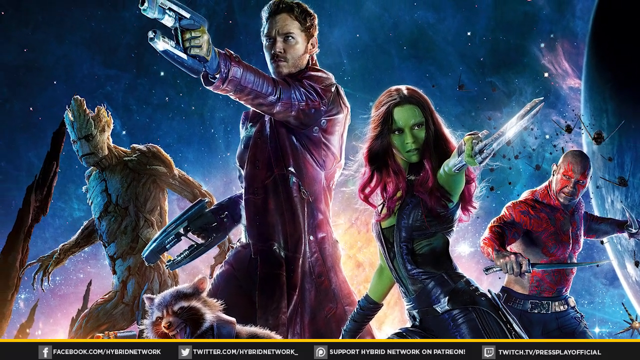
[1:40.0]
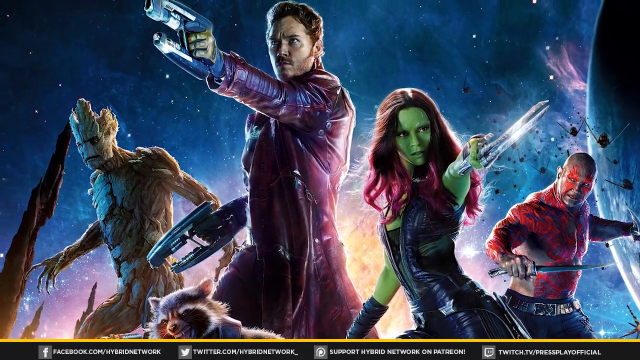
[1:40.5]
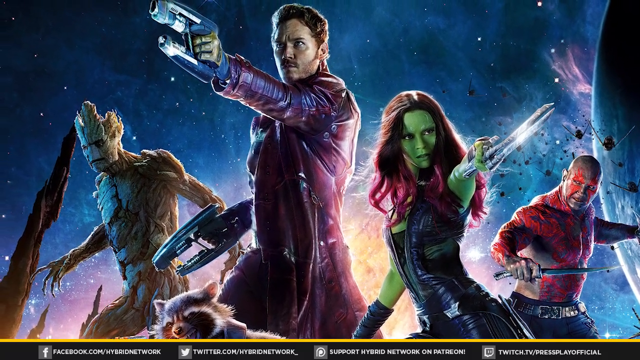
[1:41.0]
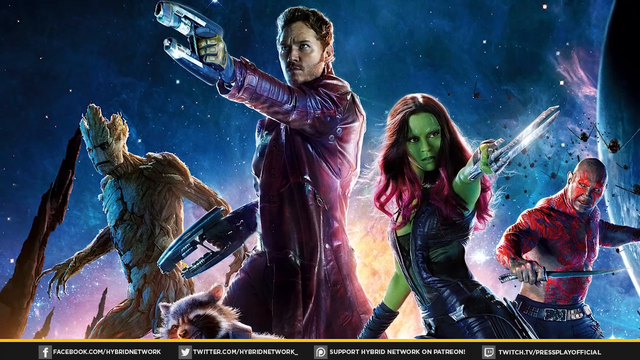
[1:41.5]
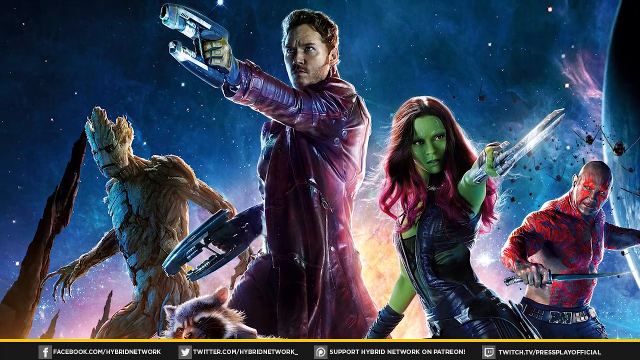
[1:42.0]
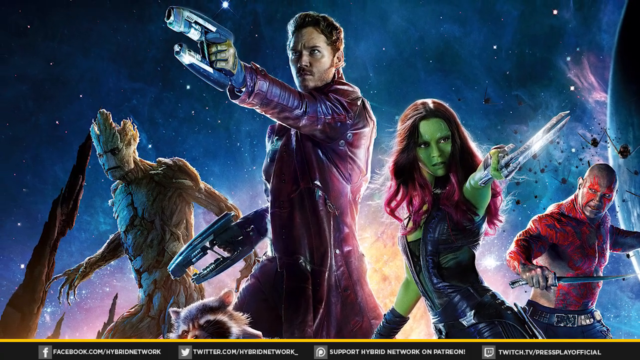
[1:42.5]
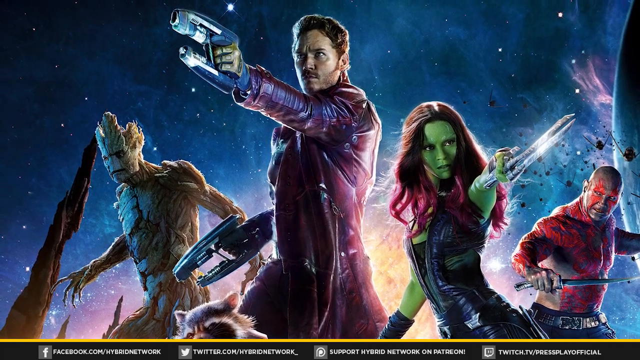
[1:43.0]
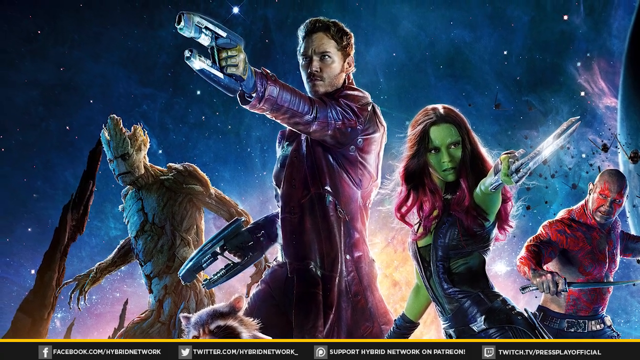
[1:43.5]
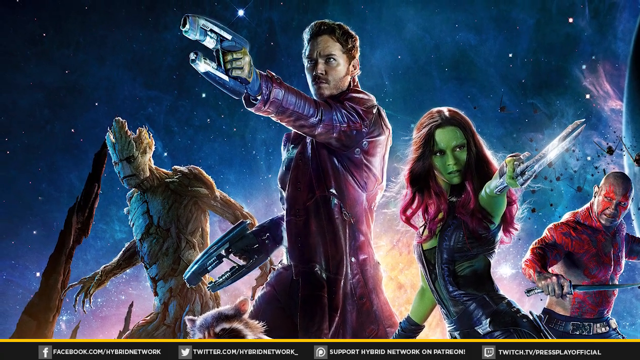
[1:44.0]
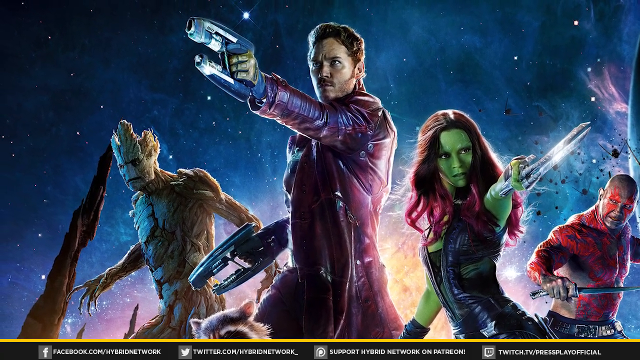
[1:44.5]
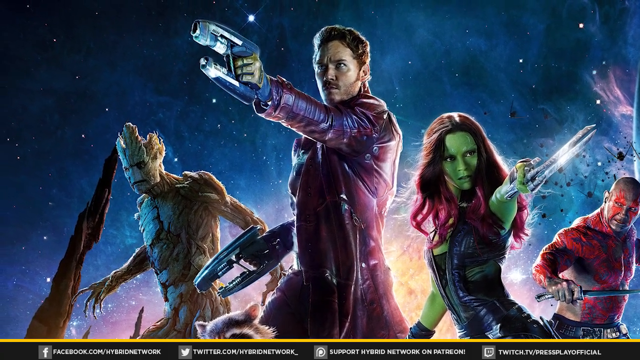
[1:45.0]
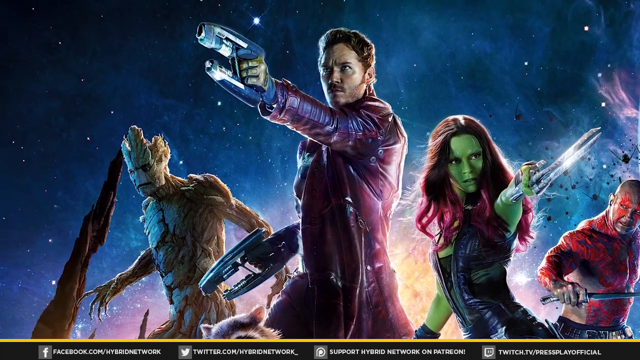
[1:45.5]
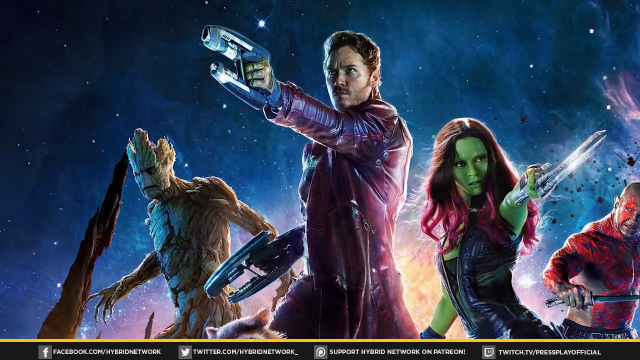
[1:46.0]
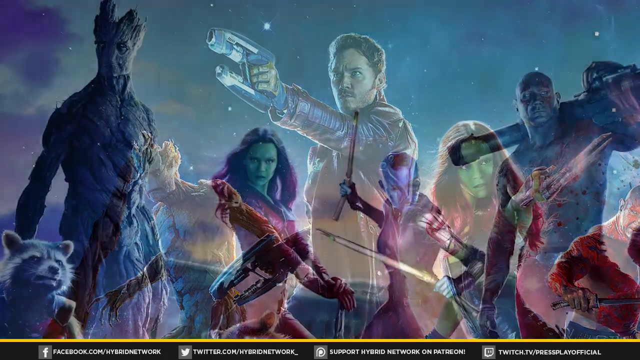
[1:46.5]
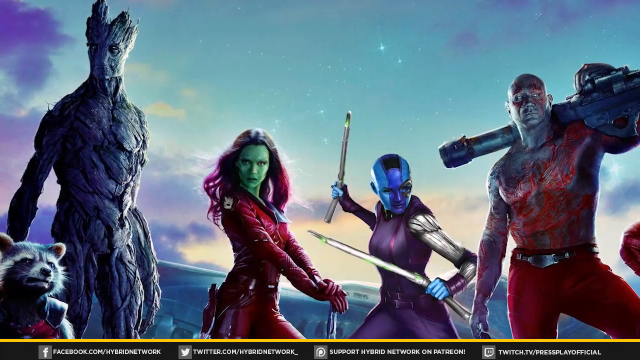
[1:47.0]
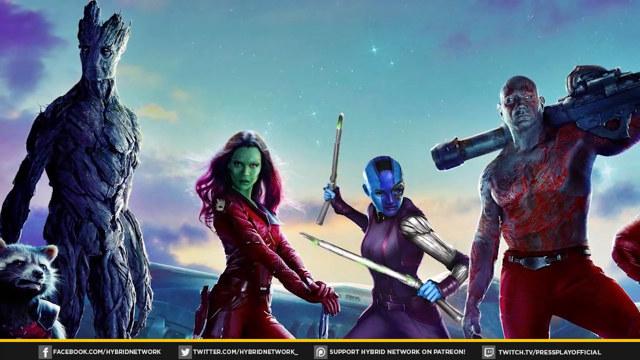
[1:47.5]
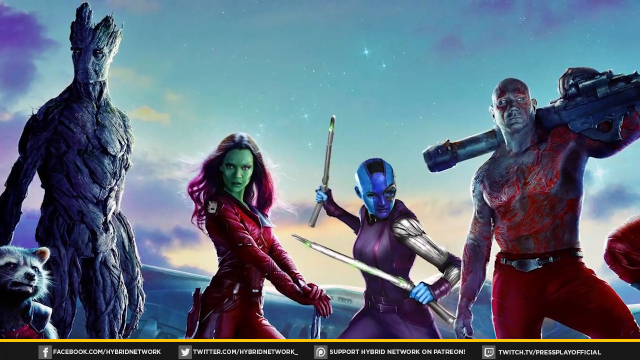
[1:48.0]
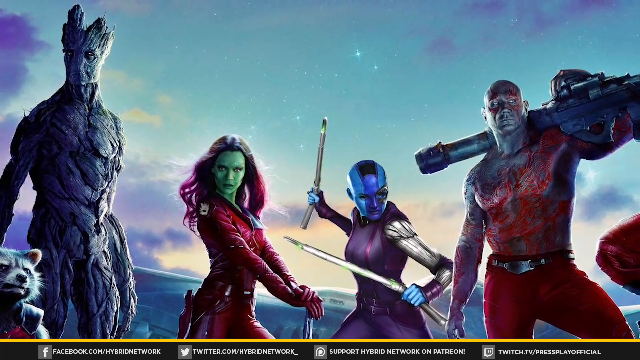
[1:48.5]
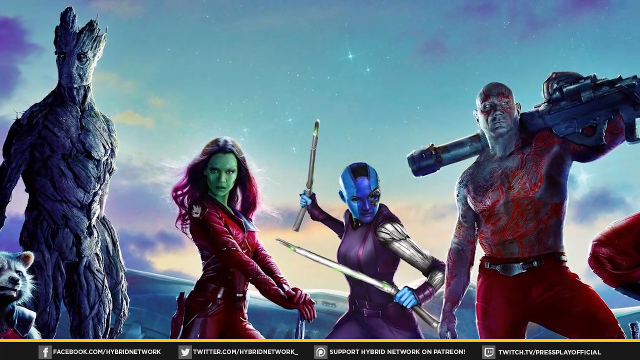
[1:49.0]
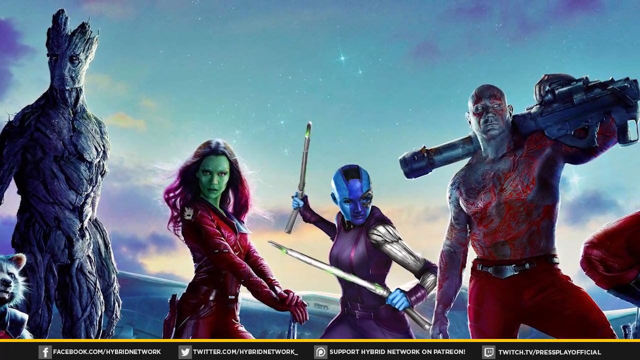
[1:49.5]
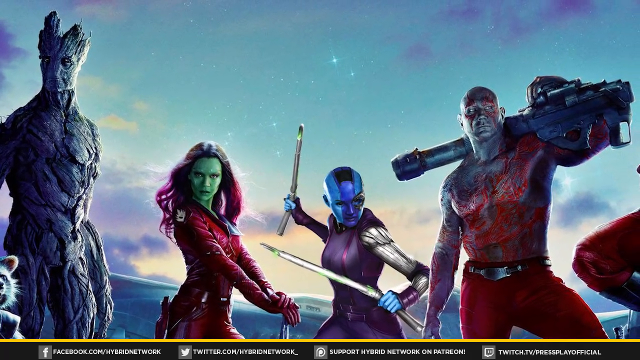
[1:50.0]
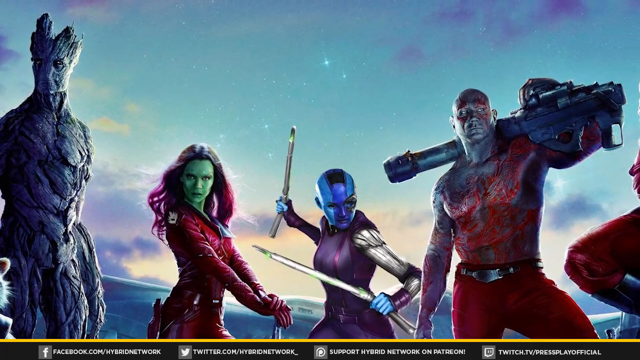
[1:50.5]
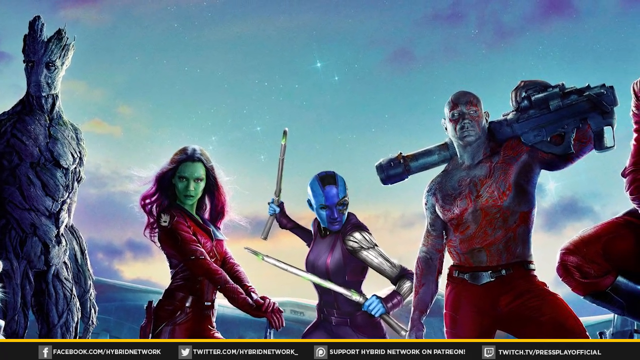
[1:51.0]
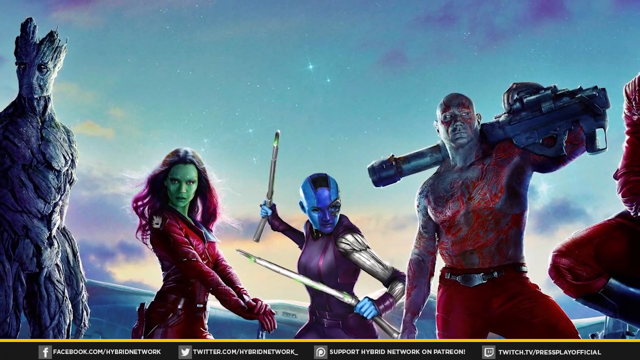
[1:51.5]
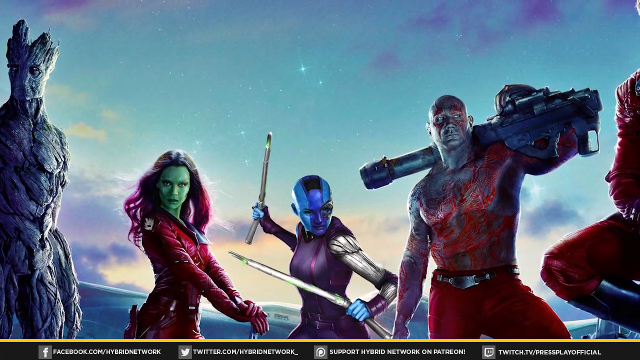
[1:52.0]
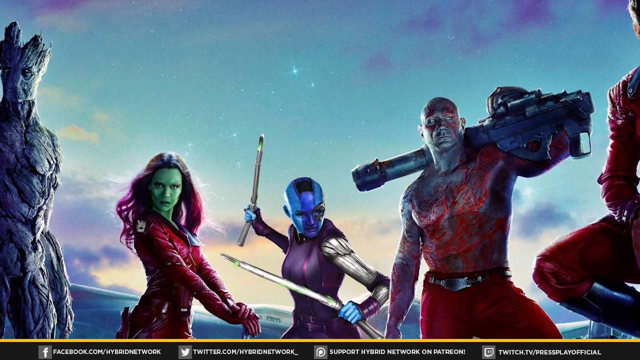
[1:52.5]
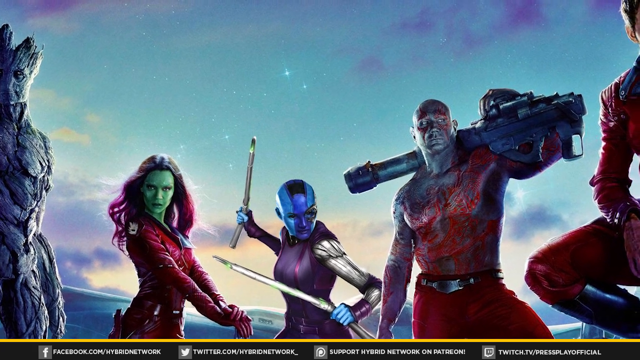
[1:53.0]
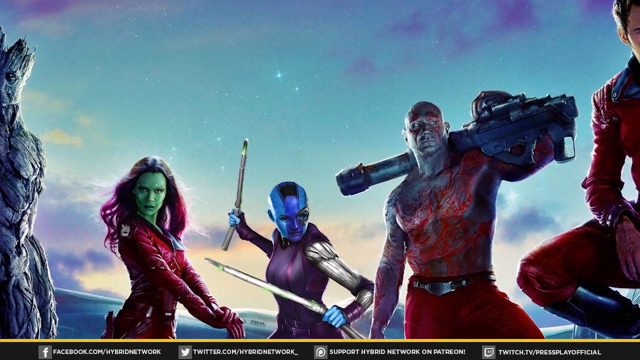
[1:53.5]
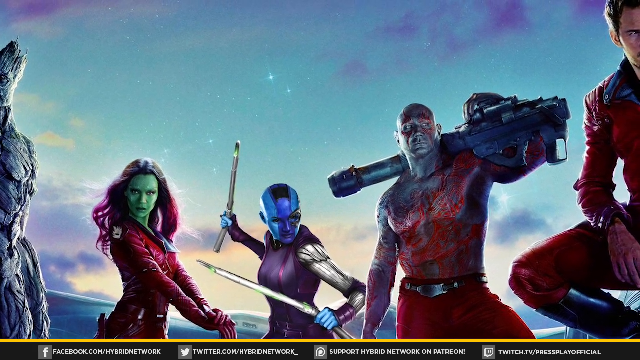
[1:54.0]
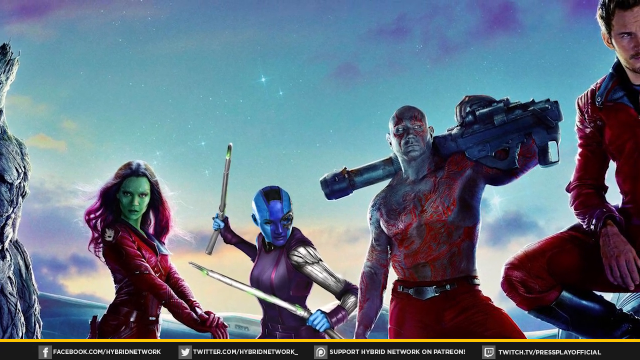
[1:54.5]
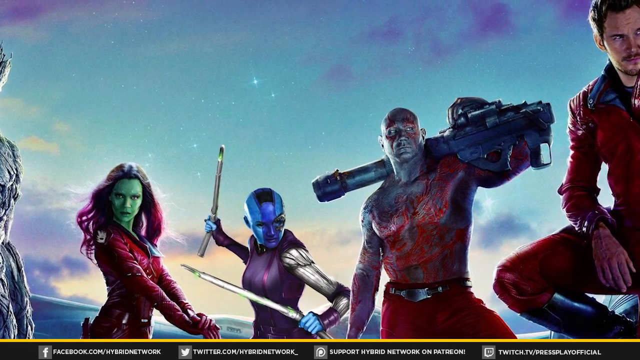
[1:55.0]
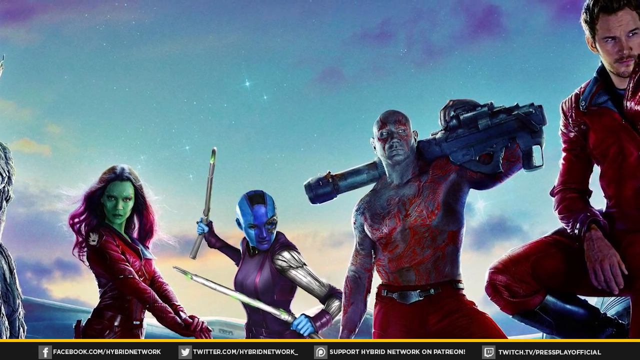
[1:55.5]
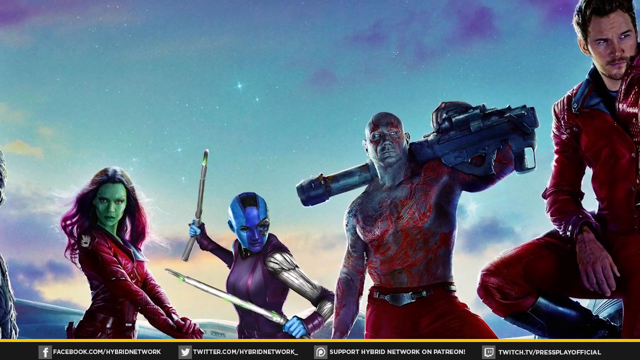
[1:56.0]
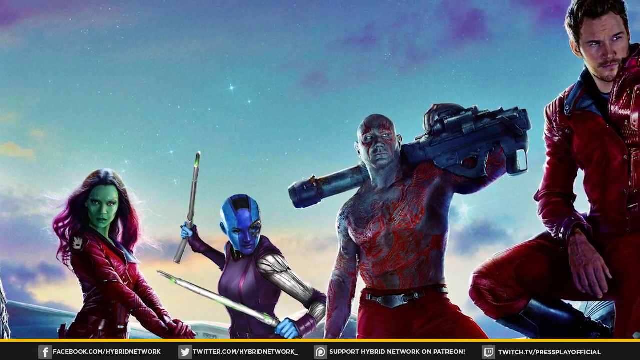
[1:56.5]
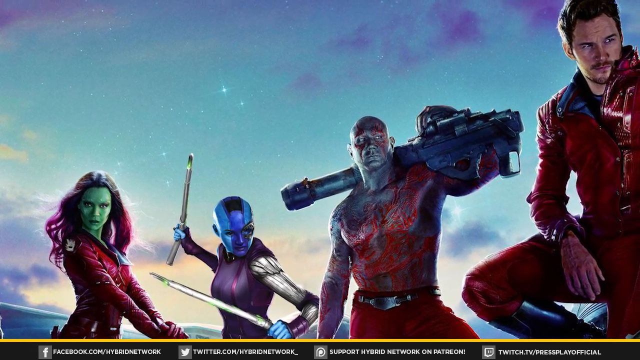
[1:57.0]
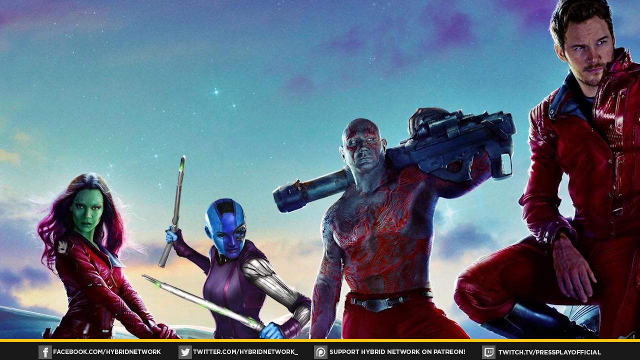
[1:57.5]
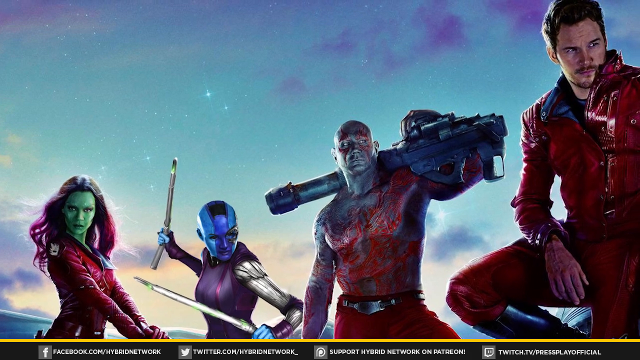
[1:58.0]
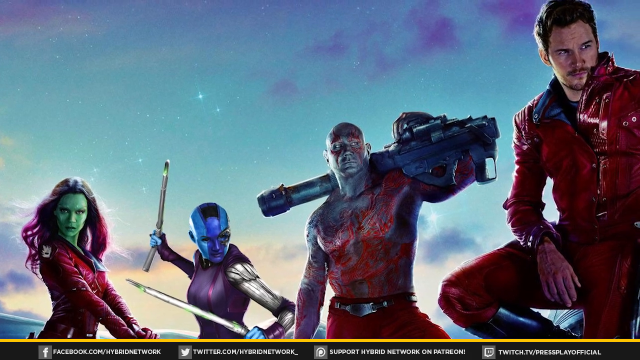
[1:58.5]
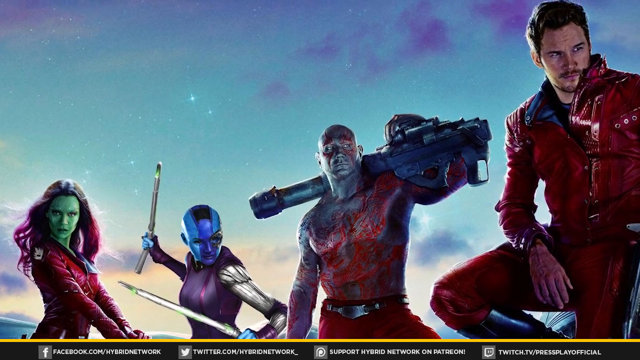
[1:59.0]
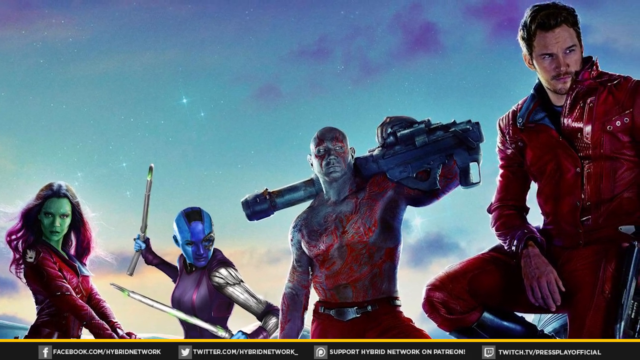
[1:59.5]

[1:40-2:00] Based on the imagery, the video appears to be about superhero movies. In the center of the frame is Chris Pratt's character from Guardians of the Galaxy, in a kind of purplish-red jacket, holding one space weapon in each hand. To his right is a plant-like monster creature that might be a big version of Groot. Rocket the Raccoon is kind of toward the left side of the frame, in front of Chris Pratt's character. Toward the right is a green-skinned woman with burgundy hair, dressed in black leather and holding a knife. Next to her is a muscled character who looks like he has red paint on him, also holding a knife. The space background is blue and purple with white stars. Toward the left is a planet that looks like it is throwing out flares, with what look like some drones in front of it, and pieces of space rock. The shot lingers for a while, and the camera kind of pans toward the Groot section. Another image of the characters follows, showing Groot, Rocket, the green-skinned, burgundy-haired character, another blue character holding two knives, and the muscled character with the red paint holding something that almost looks like a rocket launcher. The camera pans toward the right, where what looks like Chris Pratt's character appears, against a sky with purple and blue tones, some stars and some clouds. The camera continues its pan.